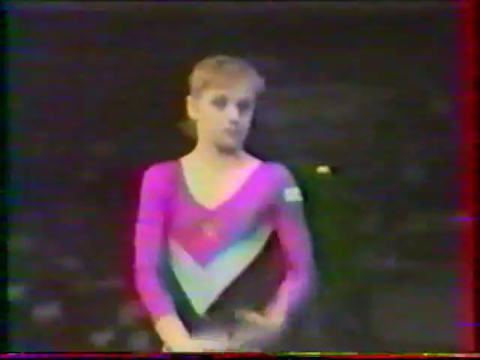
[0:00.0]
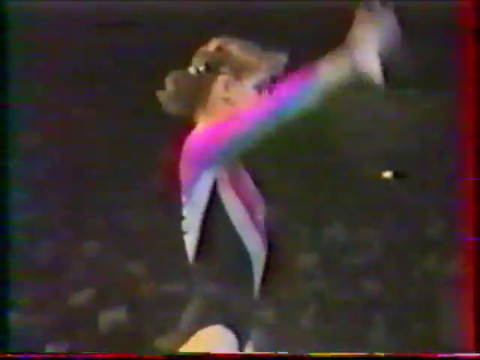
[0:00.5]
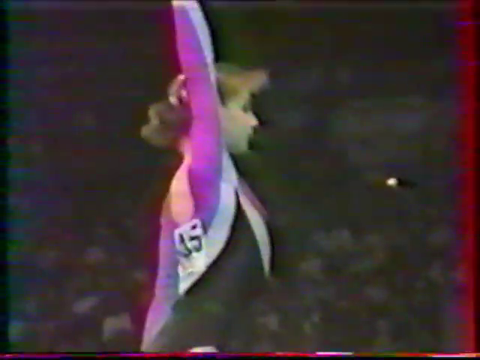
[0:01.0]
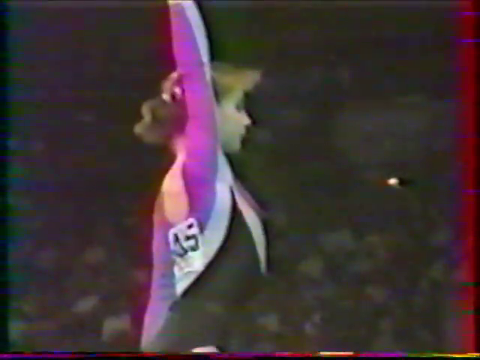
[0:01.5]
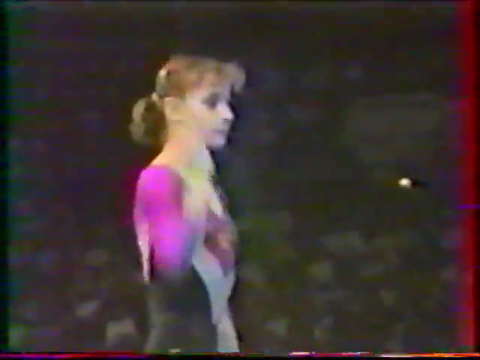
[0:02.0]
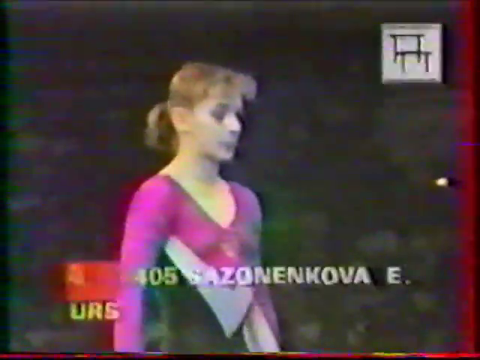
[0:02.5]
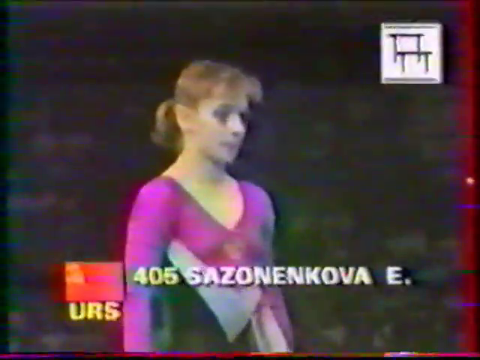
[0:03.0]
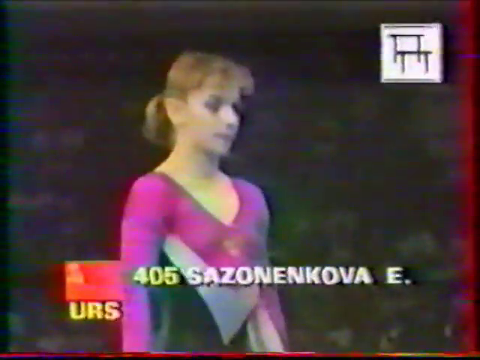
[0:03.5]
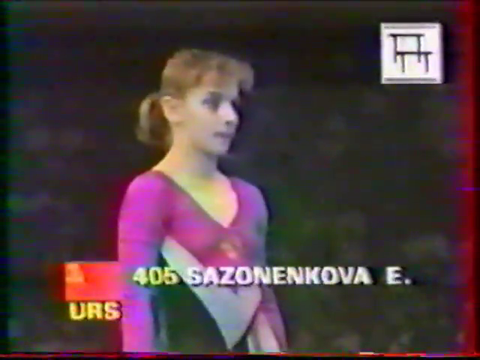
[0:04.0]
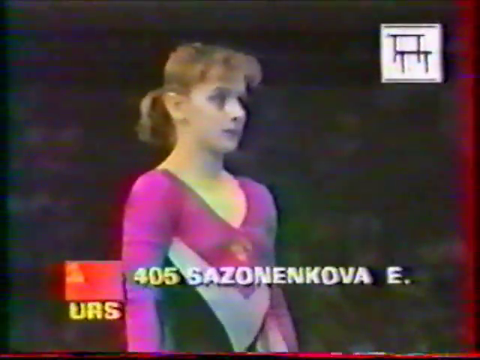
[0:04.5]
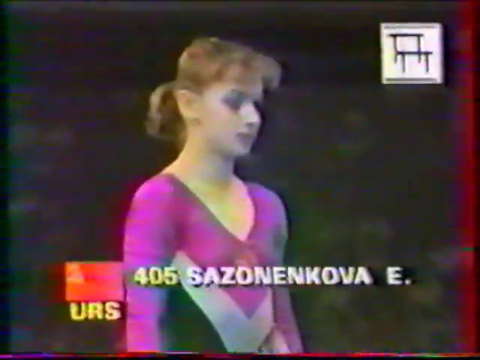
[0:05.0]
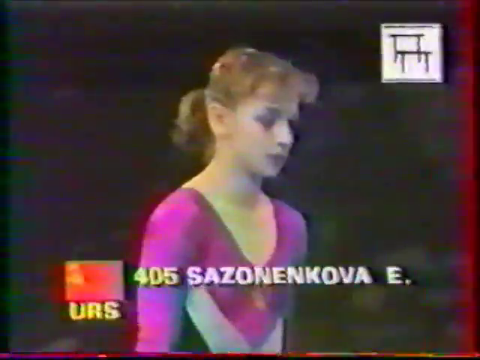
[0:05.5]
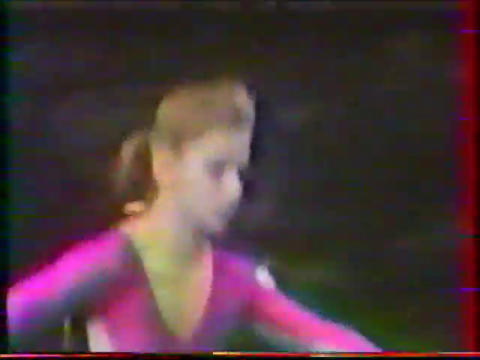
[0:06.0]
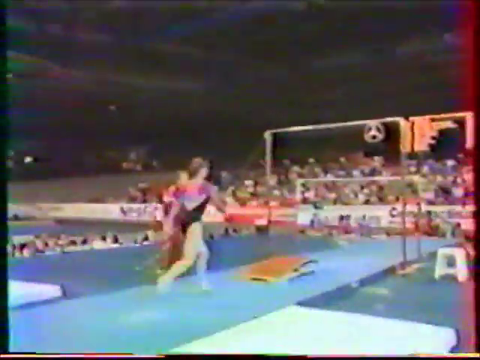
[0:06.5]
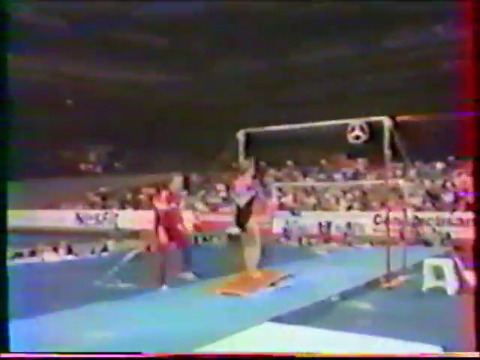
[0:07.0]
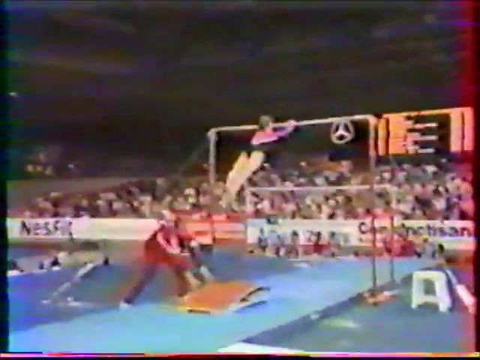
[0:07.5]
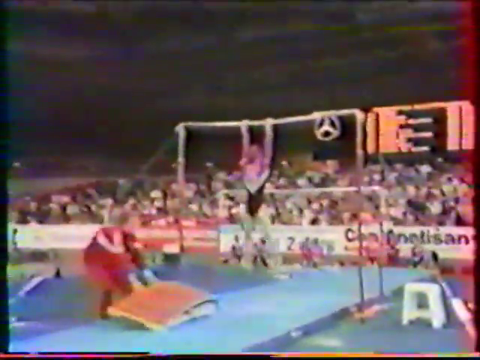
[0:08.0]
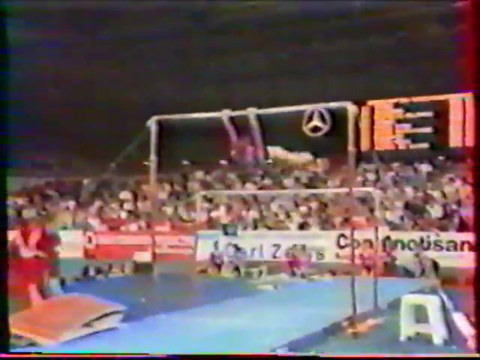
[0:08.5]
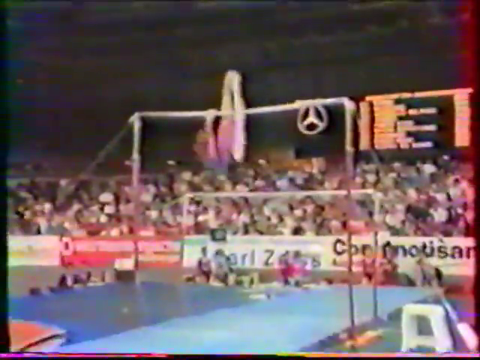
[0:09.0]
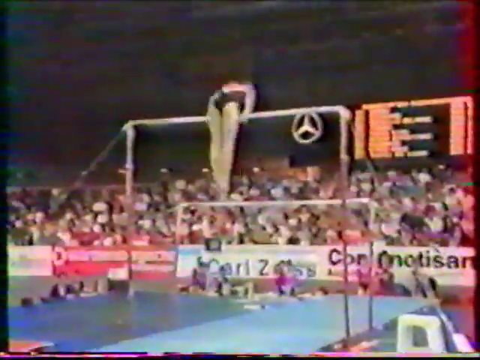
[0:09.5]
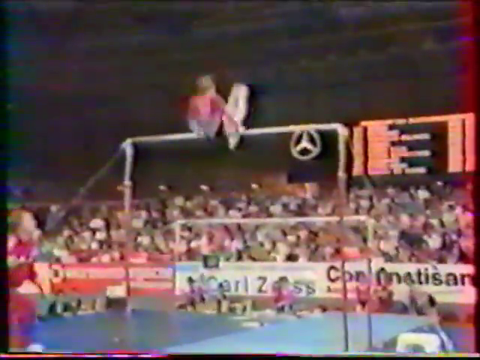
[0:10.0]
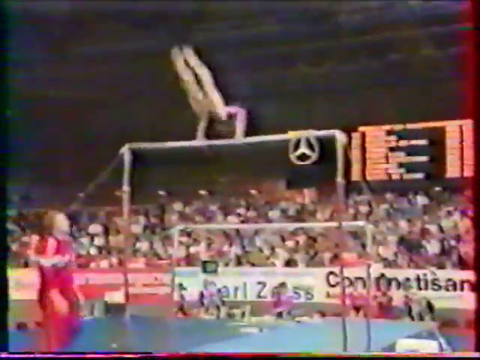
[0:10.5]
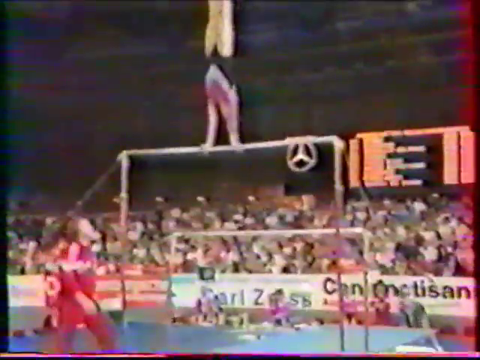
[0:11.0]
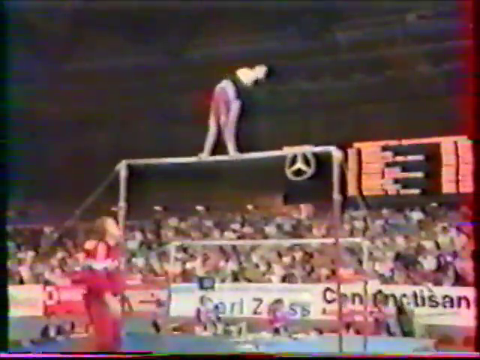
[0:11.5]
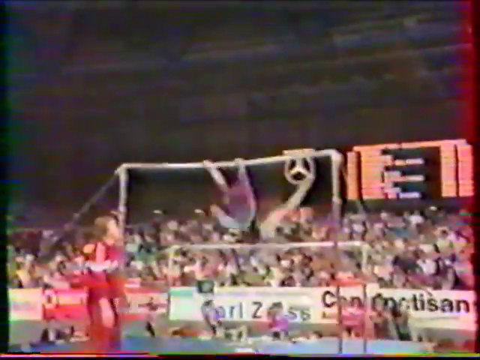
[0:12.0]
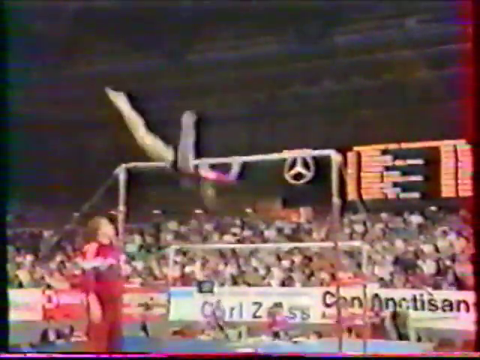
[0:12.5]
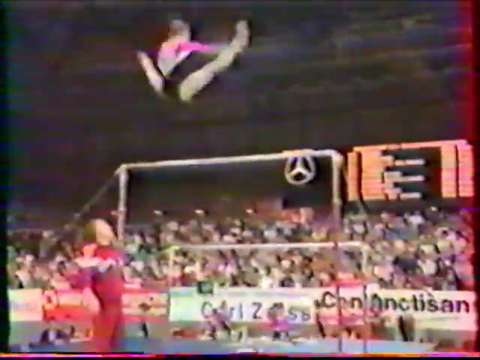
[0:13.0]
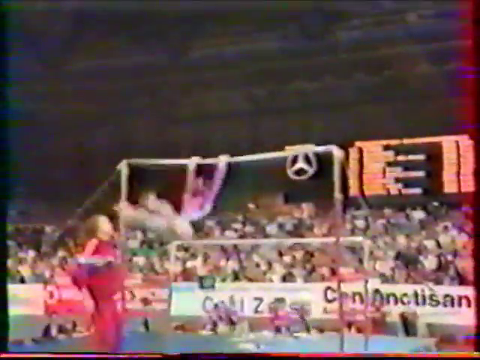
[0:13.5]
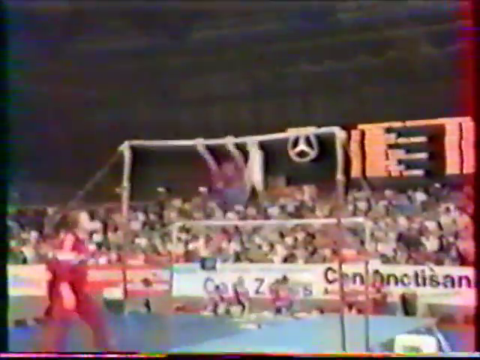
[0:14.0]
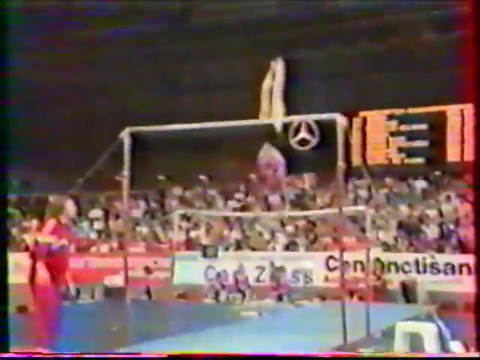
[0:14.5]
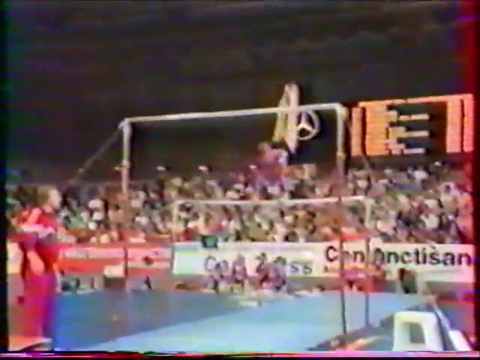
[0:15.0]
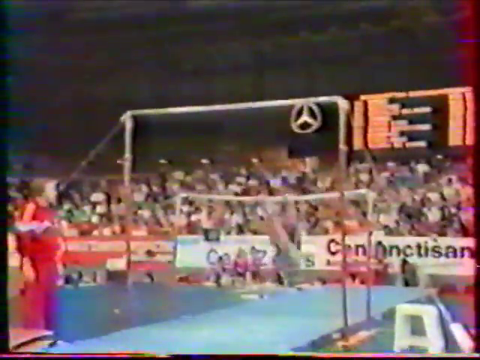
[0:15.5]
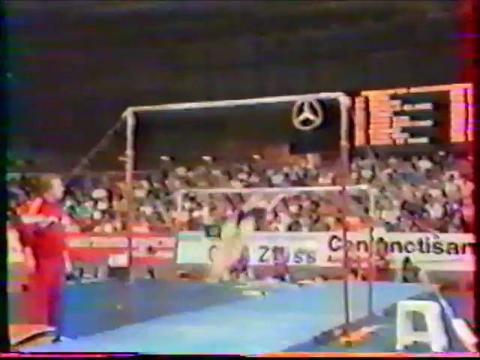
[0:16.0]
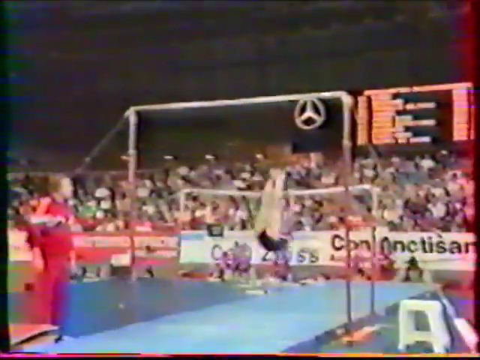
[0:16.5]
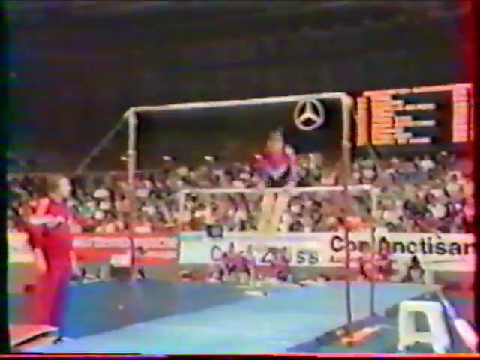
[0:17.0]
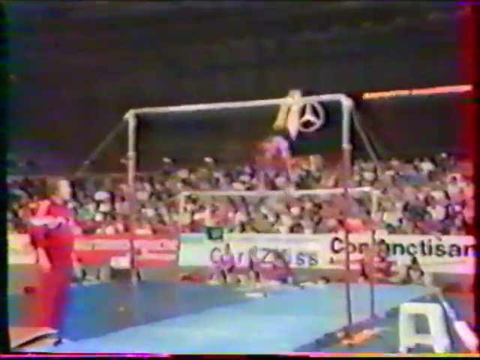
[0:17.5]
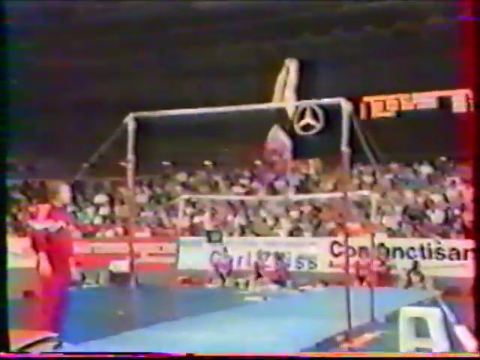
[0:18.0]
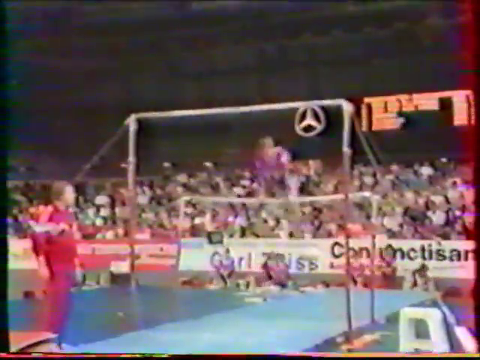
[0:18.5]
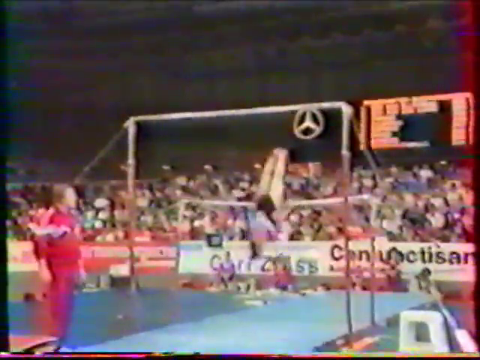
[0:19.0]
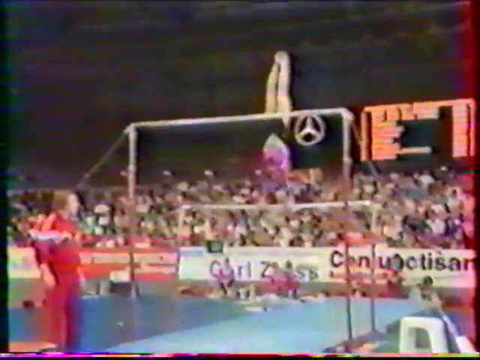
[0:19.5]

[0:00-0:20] The video opens on a blurred frame of a gymnast. She approaches the camera, then turns side-on, facing the right of the screen, and raises her arm vertically. She turns again slightly so that her left shoulder is still behind her right shoulder, and she looks toward the bottom right of the screen. At the bottom of the blurred frame she is identified: a red flag with "URS" in yellow font underneath it, and in line with the red flag, "405 Sassonenkova E." She makes her run-up to the first bar, bouncing on a platform that gives her great elevation, grips the bar with two hands and immediately swings forward, then back. As she swings back she raises herself to be broadly horizontal with the bar before tipping over forwards to complete the manoeuvre. It is the parallel bars event, and she performs on the first bar before switching to the lower of the two bars.